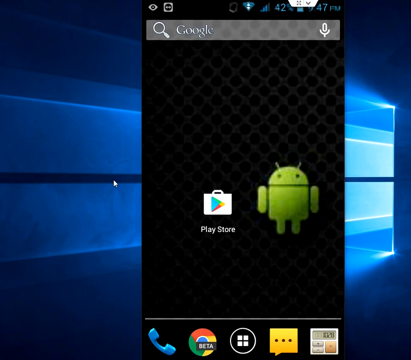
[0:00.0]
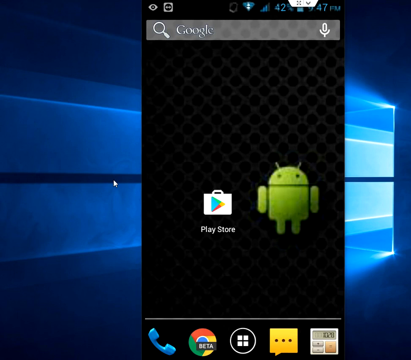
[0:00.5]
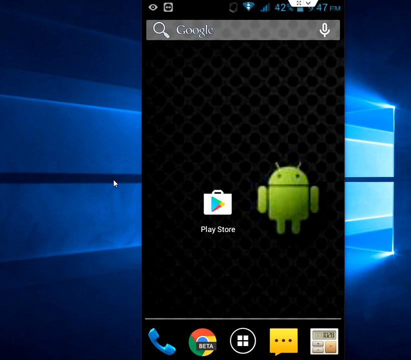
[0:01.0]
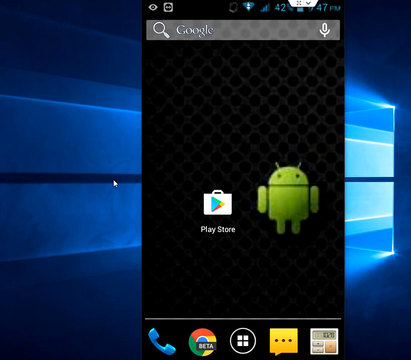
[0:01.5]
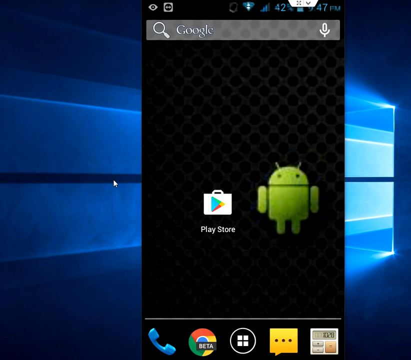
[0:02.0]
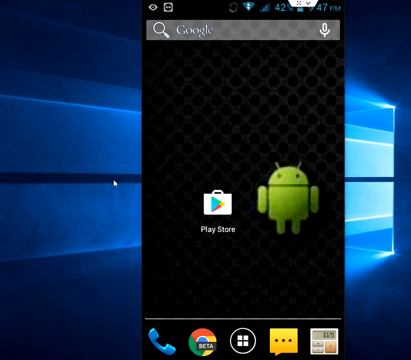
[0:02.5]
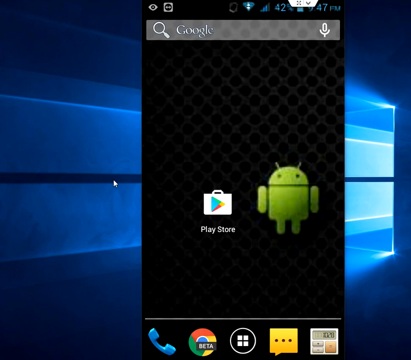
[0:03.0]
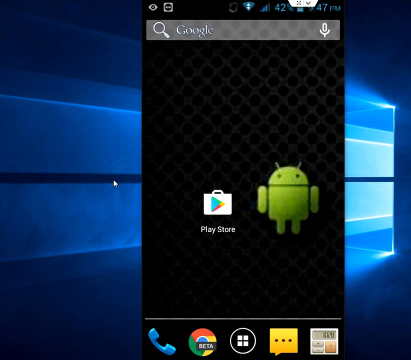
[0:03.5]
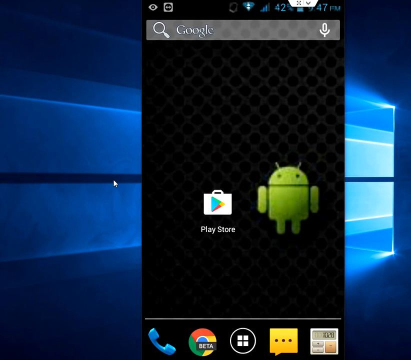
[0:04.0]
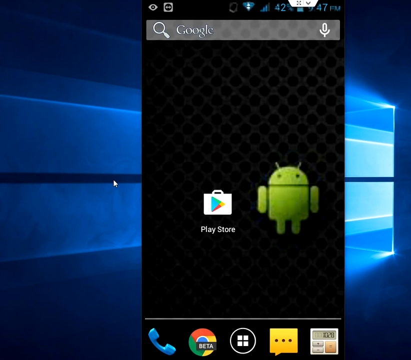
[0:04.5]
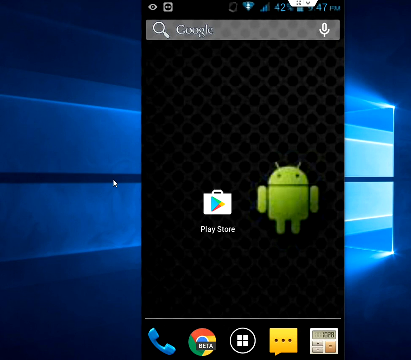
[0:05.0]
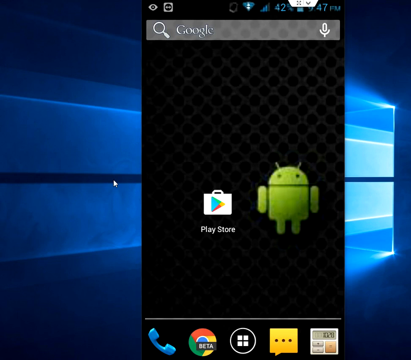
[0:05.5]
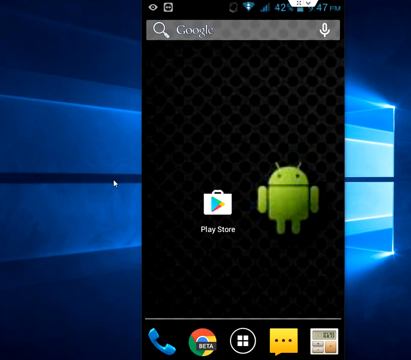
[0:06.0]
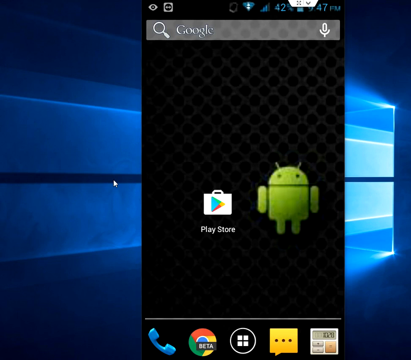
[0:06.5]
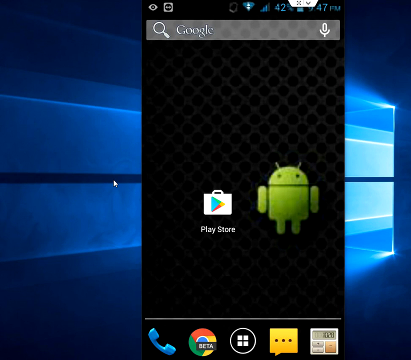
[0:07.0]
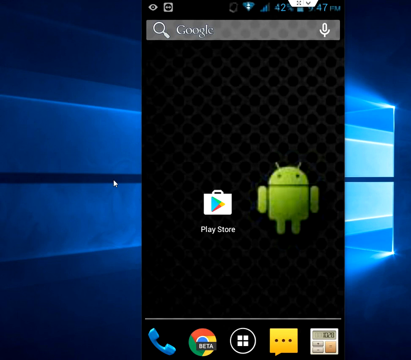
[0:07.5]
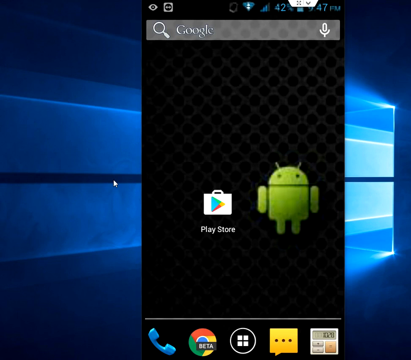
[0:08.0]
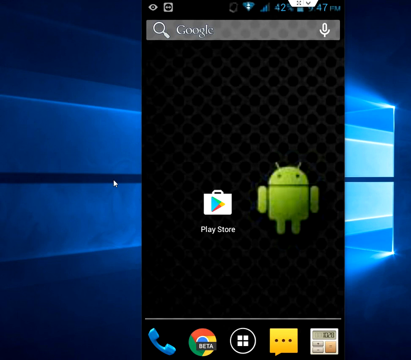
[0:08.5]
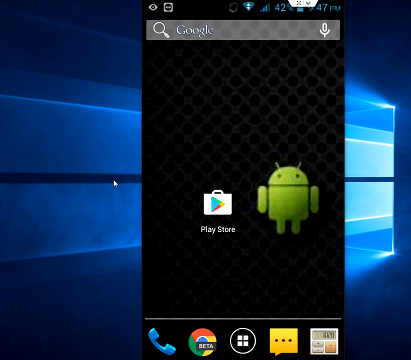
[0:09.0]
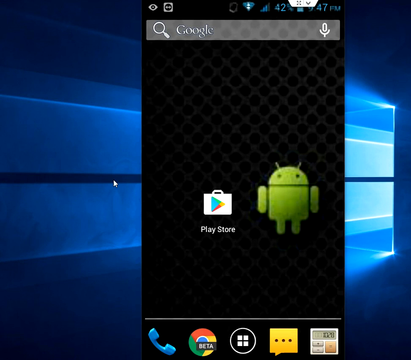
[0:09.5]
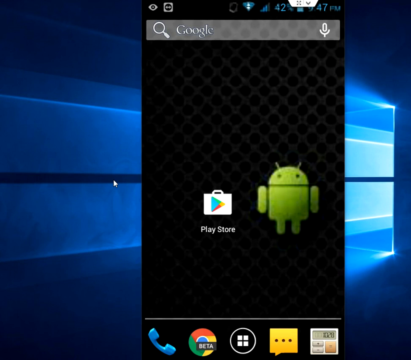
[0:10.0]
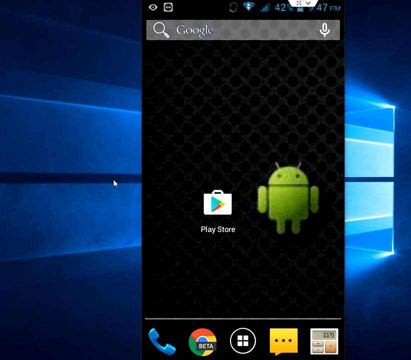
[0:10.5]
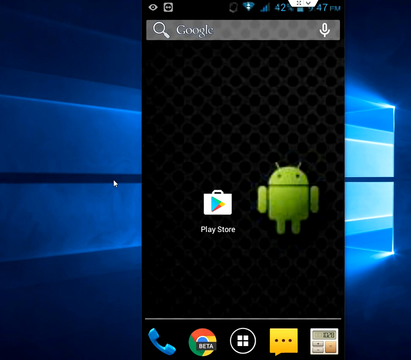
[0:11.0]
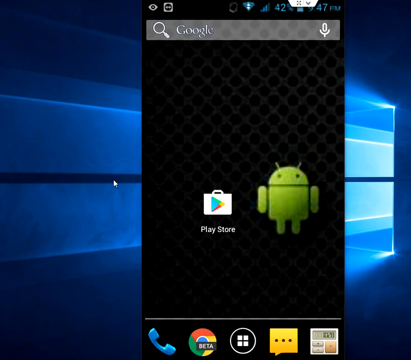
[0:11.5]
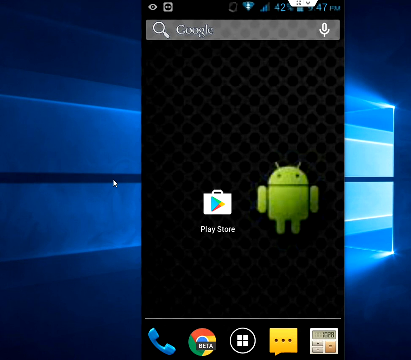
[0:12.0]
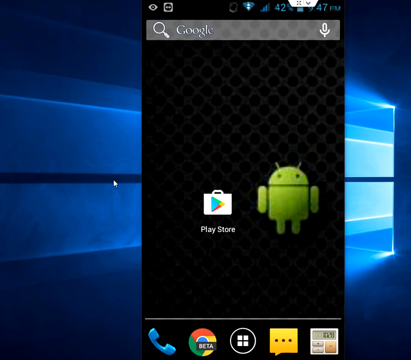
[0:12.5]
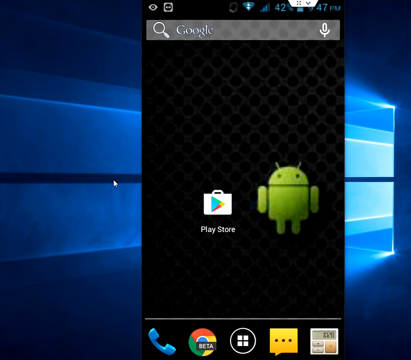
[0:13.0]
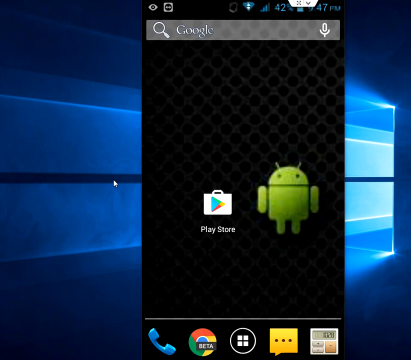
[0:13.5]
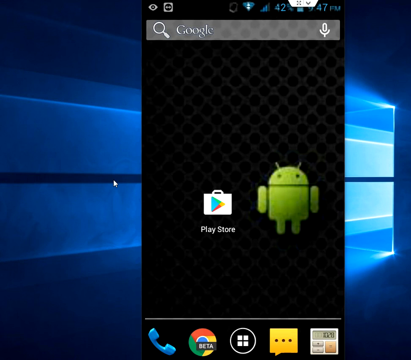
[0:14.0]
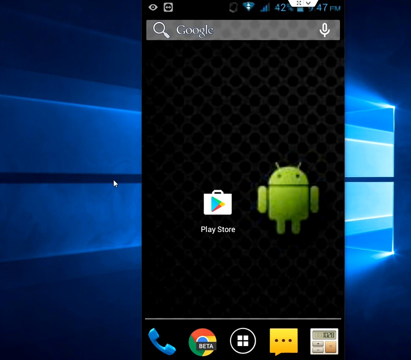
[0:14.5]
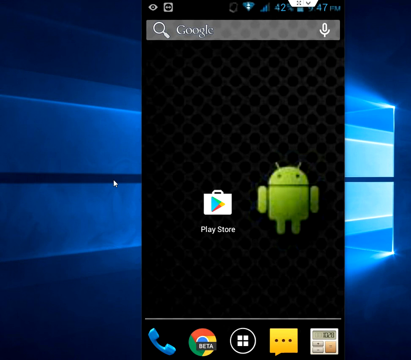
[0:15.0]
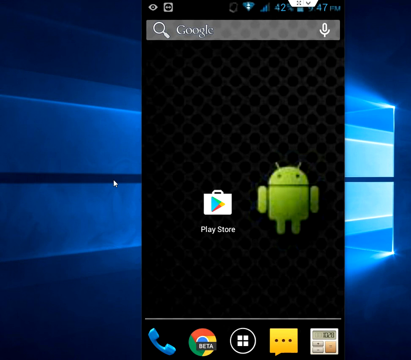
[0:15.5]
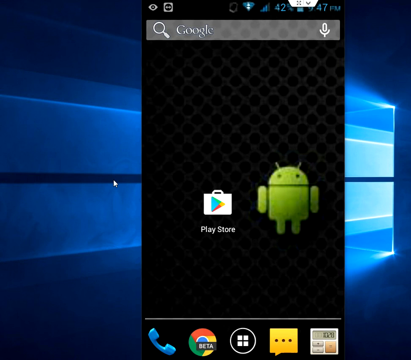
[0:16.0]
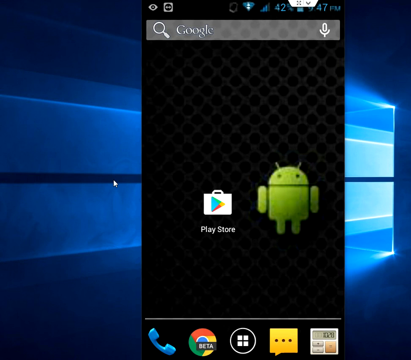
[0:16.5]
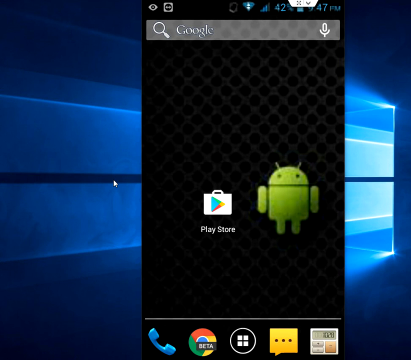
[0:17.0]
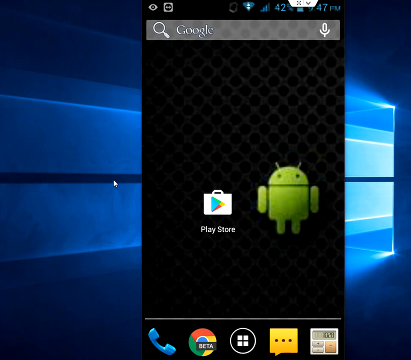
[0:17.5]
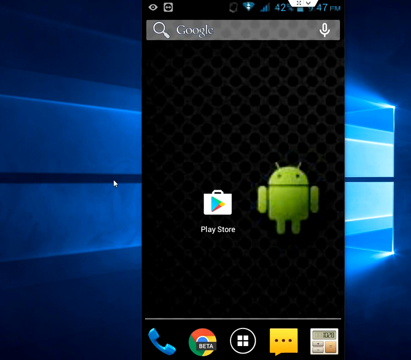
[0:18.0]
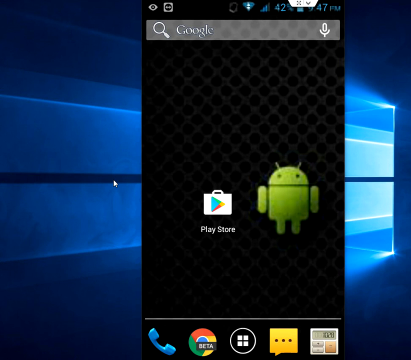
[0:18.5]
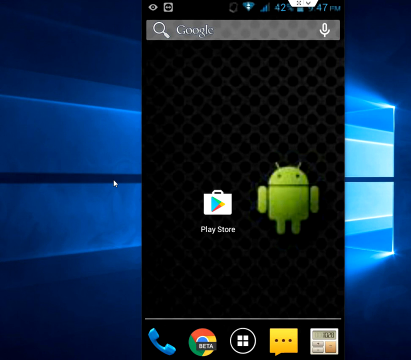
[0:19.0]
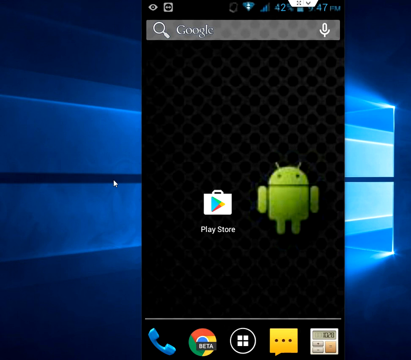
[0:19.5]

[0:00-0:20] A desktop computer has a blue desktop background. A single window is open, with a black, patterned background and a green Android robot on the right. In the window there is a search bar that says "Google" with a microphone icon, along with the Google Play Store icon. A mouse pointer is on the left of the screen. There is no movement.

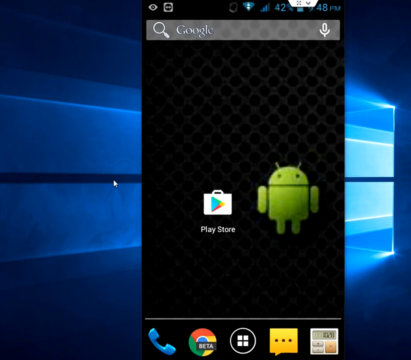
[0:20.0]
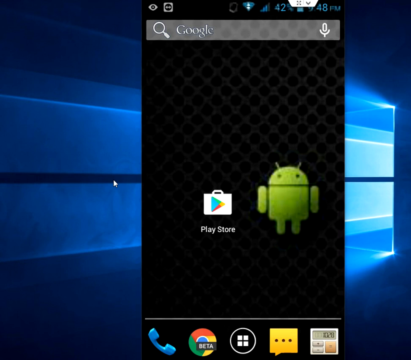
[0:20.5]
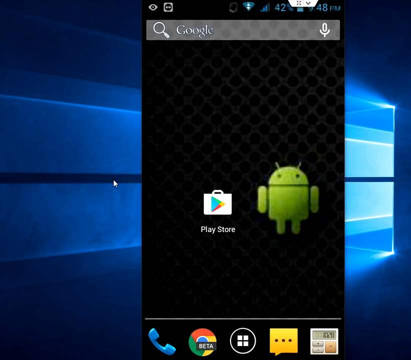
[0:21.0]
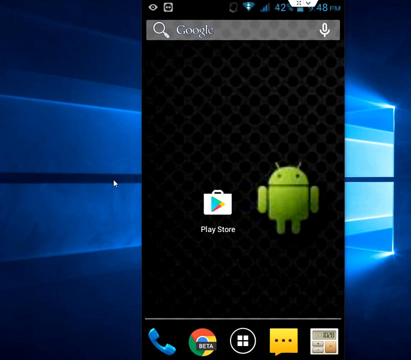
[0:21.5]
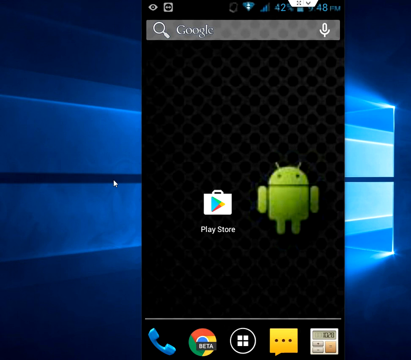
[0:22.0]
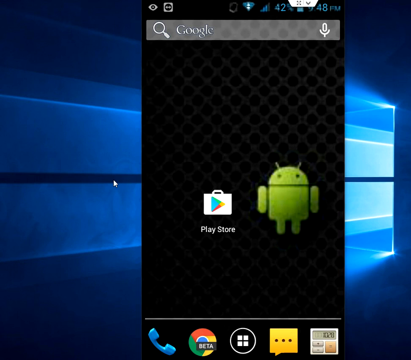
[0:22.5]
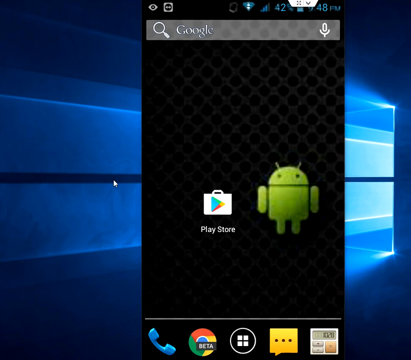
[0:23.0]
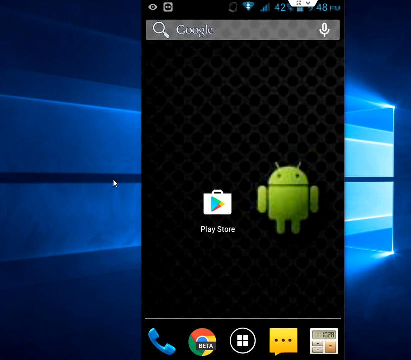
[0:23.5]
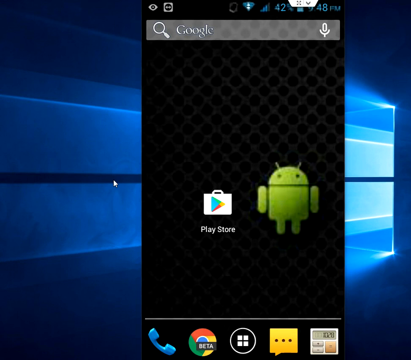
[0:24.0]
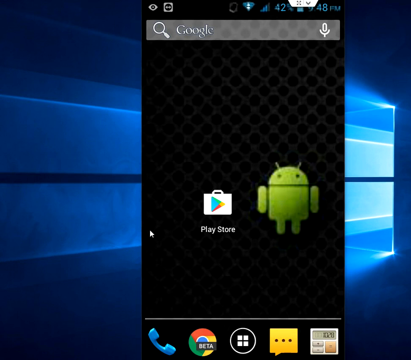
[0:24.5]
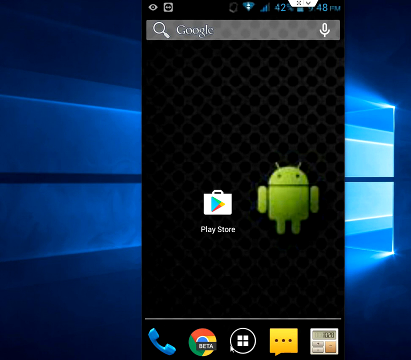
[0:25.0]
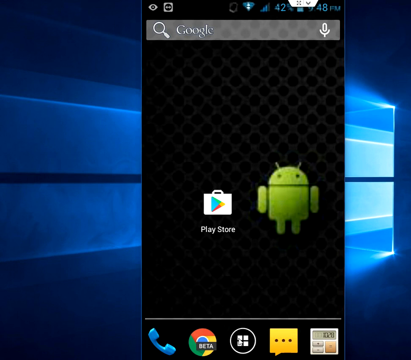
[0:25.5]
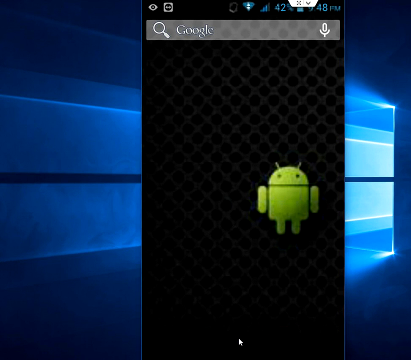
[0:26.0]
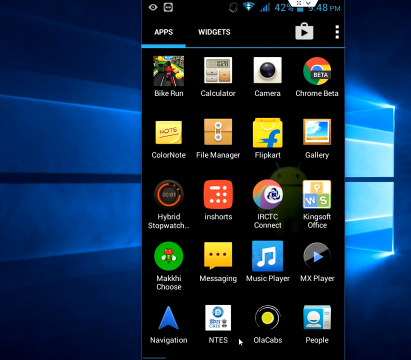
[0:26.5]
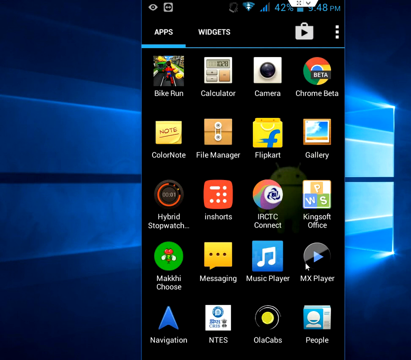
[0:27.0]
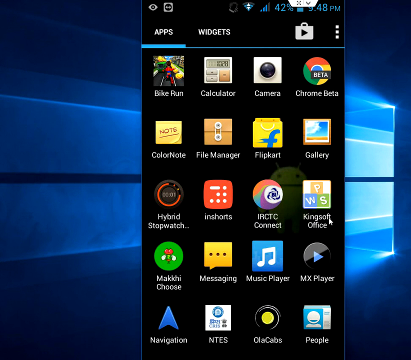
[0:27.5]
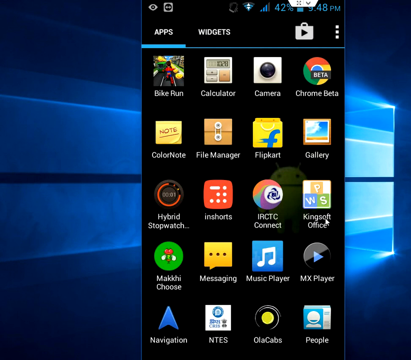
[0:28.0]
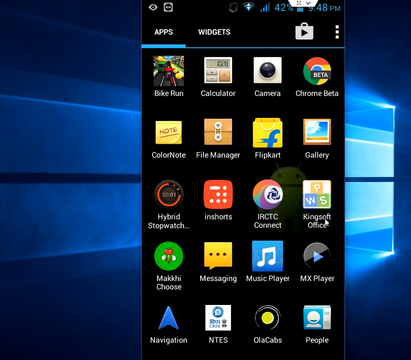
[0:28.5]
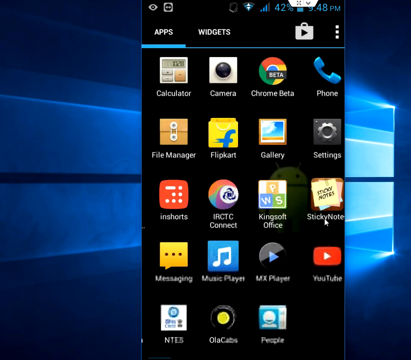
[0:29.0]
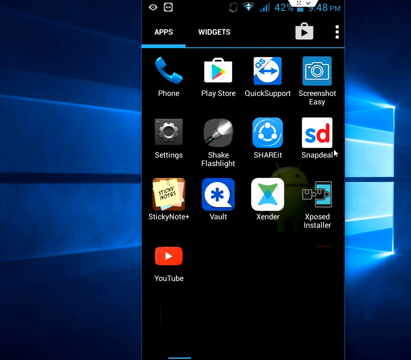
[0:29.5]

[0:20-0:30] For a few seconds the screen stays static, still showing the blue wallpaper and the open window with the black patterned background and the green Android icon. Then the mouse quickly slides across the screen and moves to the bottom of the screen, where it clicks on the center icon, which appears to be the apps section. The apps section quickly opens, displaying many different apps. The mouse moves through the pages of apps before landing on the settings section, which has a cog icon.